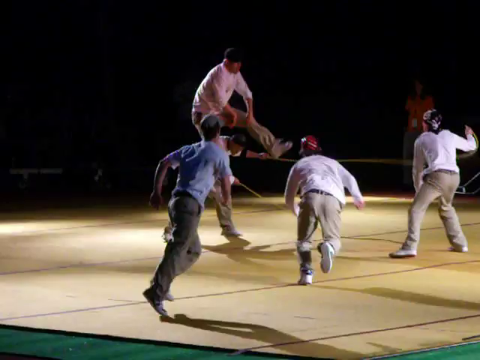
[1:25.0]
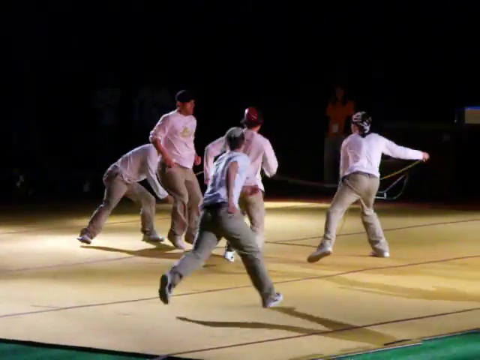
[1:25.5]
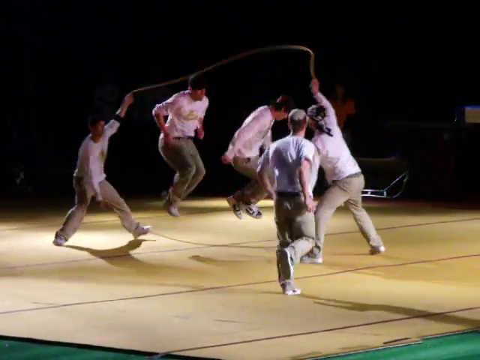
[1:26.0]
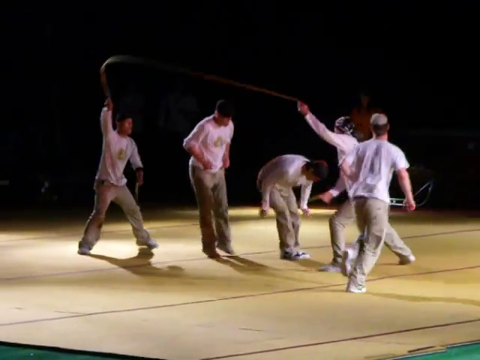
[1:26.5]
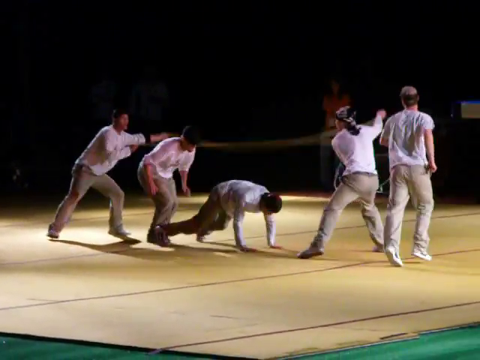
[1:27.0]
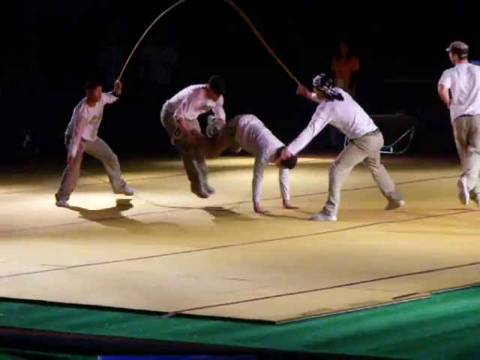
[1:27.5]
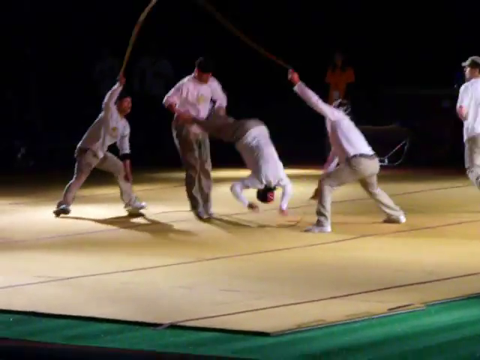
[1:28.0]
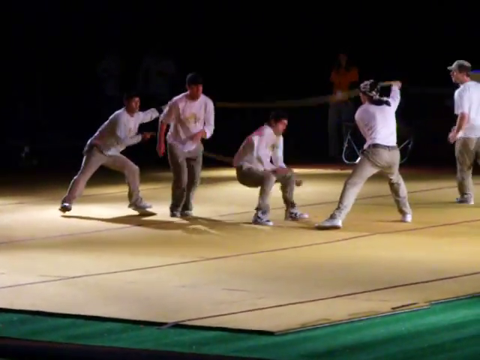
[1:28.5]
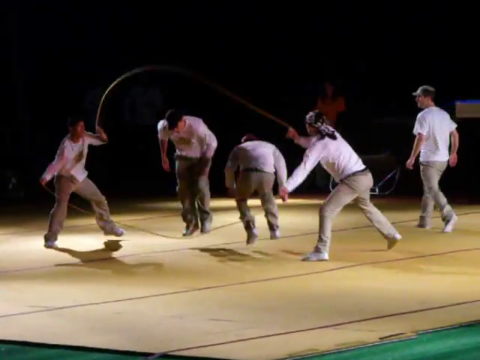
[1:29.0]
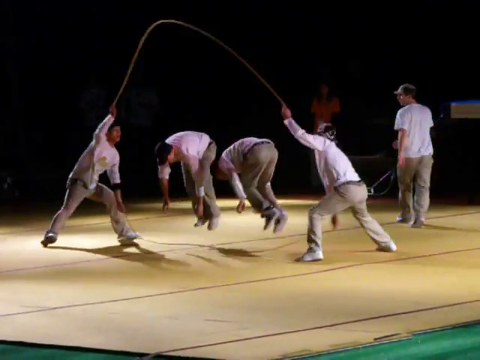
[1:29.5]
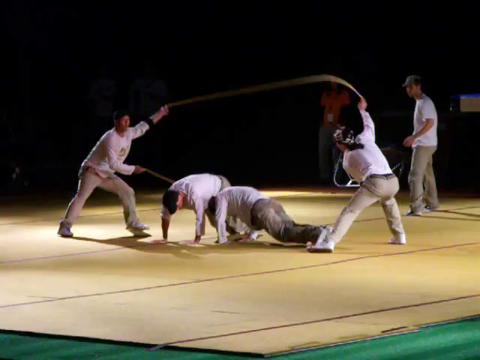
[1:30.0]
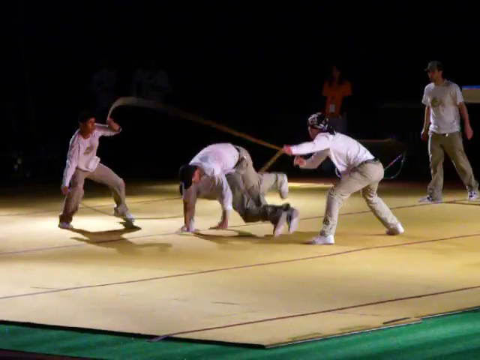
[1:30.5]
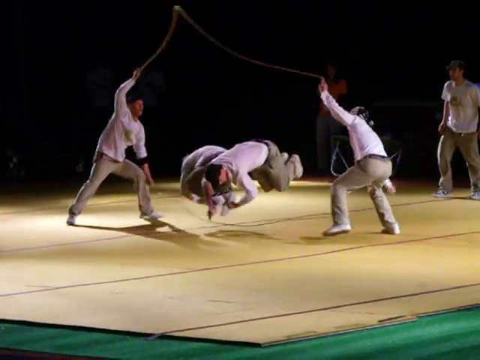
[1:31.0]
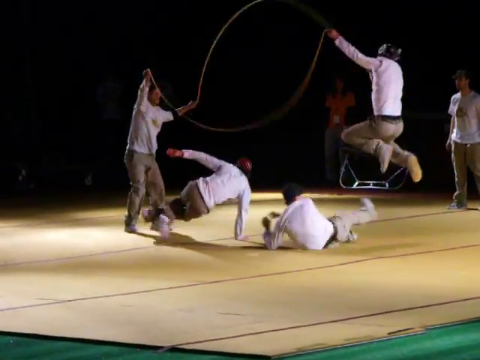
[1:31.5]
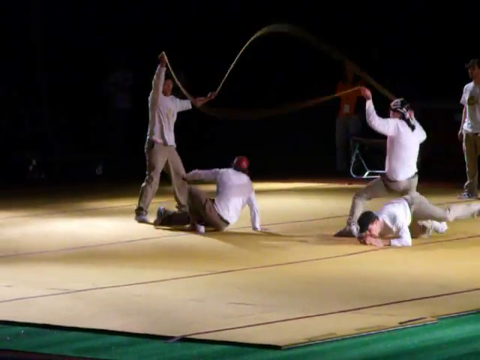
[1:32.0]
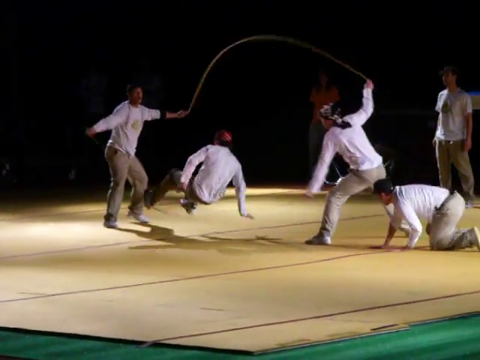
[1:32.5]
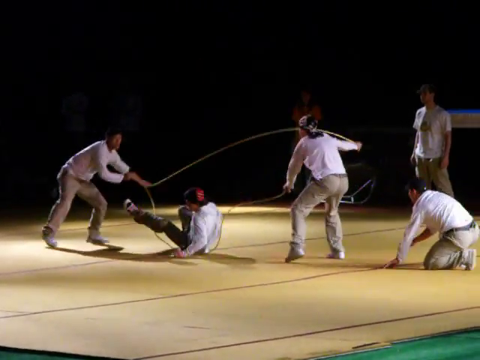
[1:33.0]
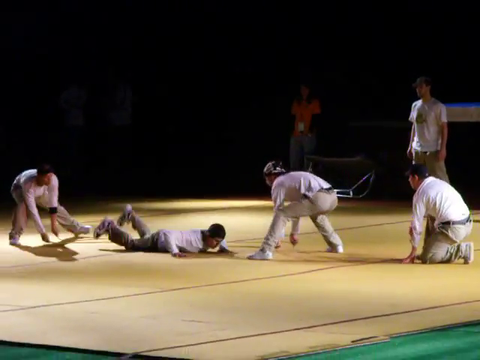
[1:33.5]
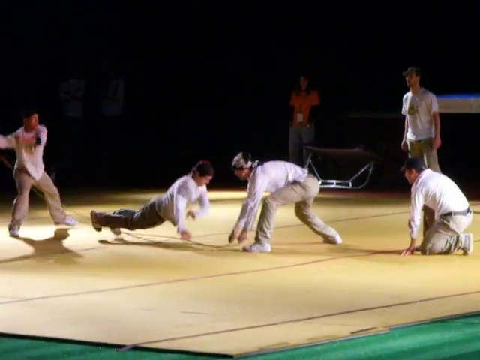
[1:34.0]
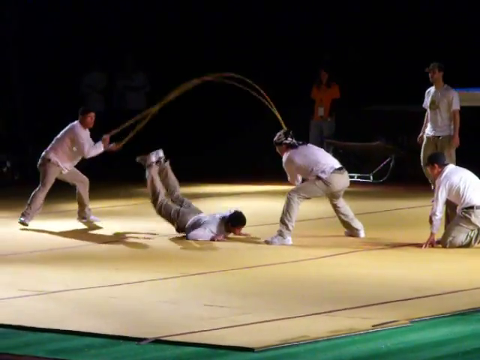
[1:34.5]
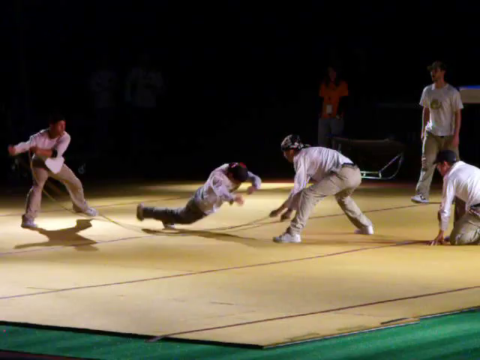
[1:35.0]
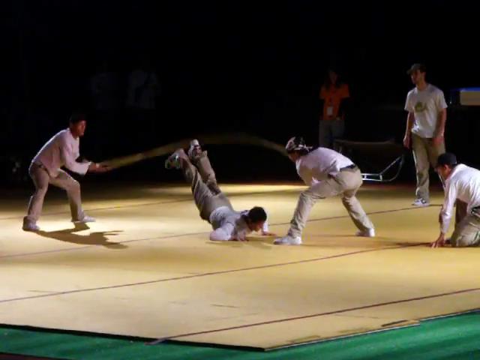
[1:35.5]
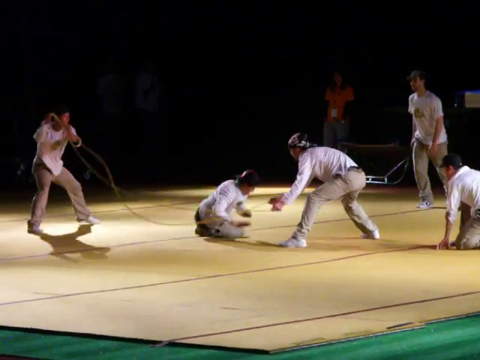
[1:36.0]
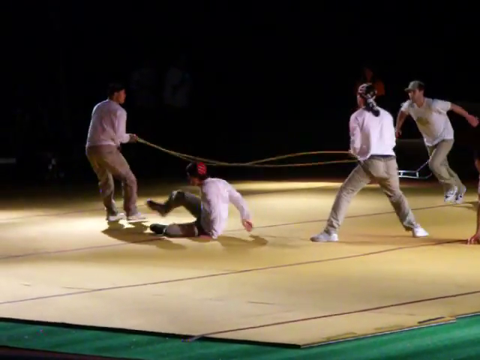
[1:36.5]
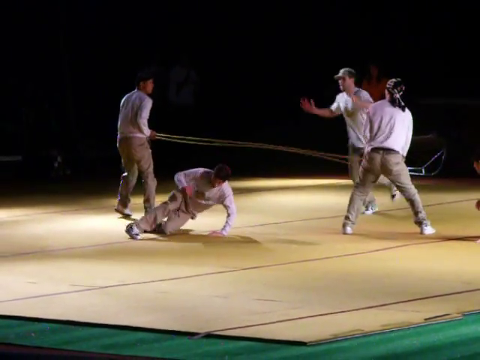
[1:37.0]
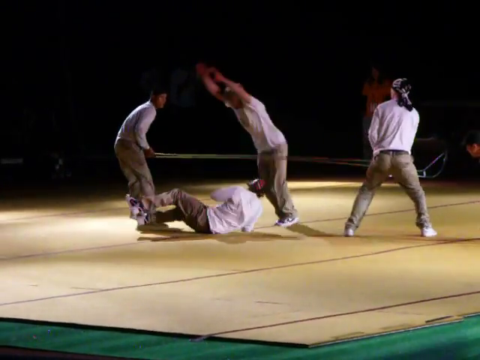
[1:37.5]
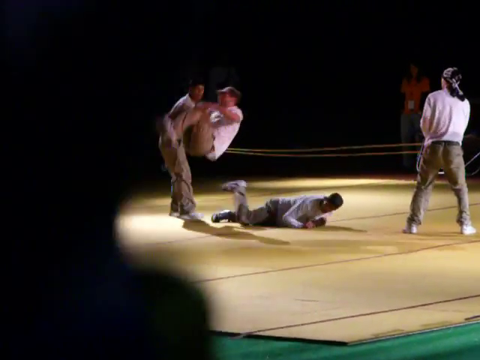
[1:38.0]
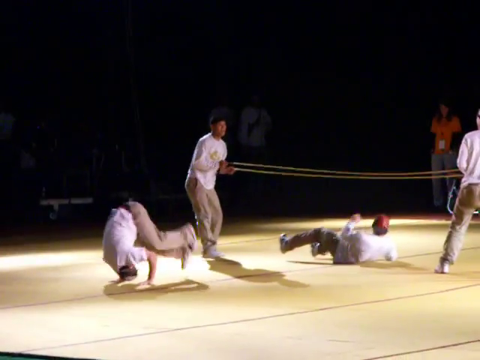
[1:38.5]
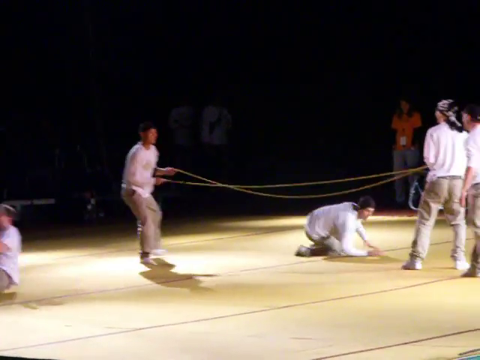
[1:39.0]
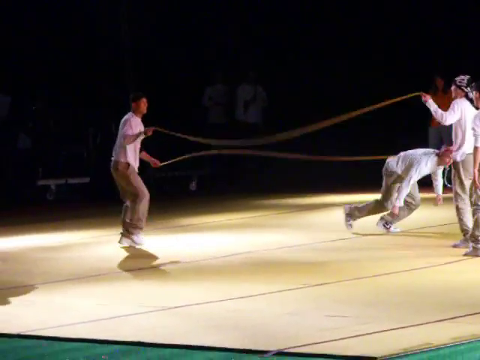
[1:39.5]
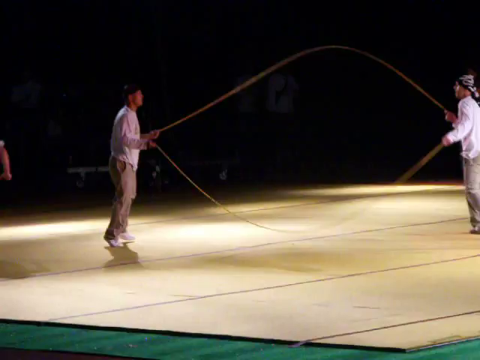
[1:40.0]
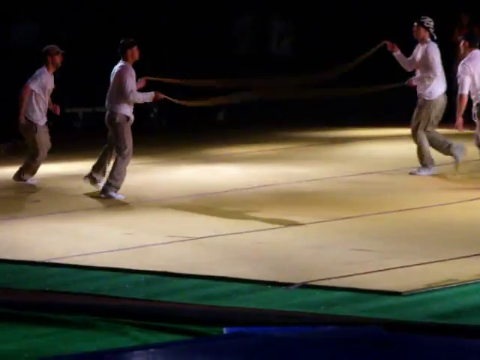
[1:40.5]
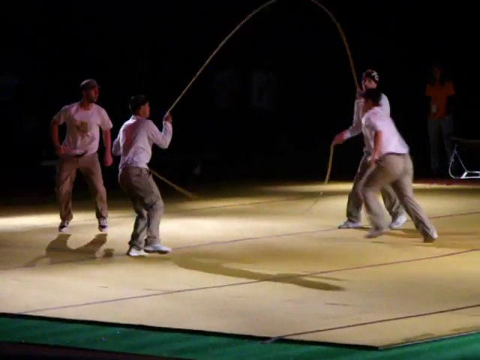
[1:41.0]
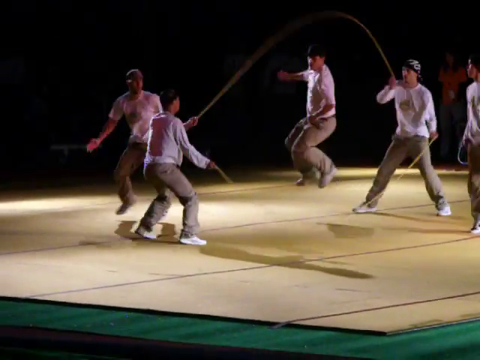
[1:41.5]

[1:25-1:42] Again the performers jump into different positions on the floor. One move involves a kind of wheelbarrow that turns into a flip. Both get into a plank position, and one goes under while the other goes over. One performer barrel rolls out of the ropes while the other begins doing the worm in the center as both ropes go around him, and he clears the rope fully. The two people holding the ropes then pull it taut like a limbo bar, and one performer flips over the top of it. They then shift so that instead of being parallel to the videographer they are more perpendicular, giving a different perspective. The video ends as one of the performers starts to jump in, and the routine seems to be continuing with performers tagging in and out between jumping and controlling the ropes.